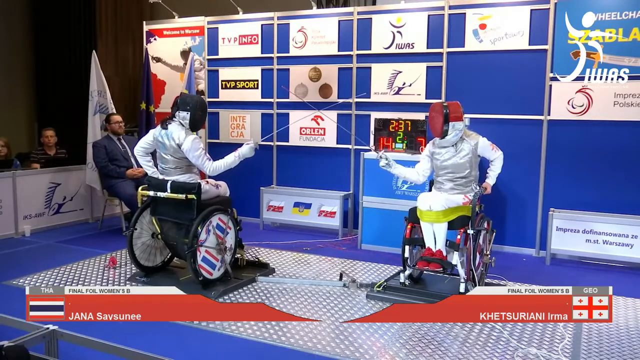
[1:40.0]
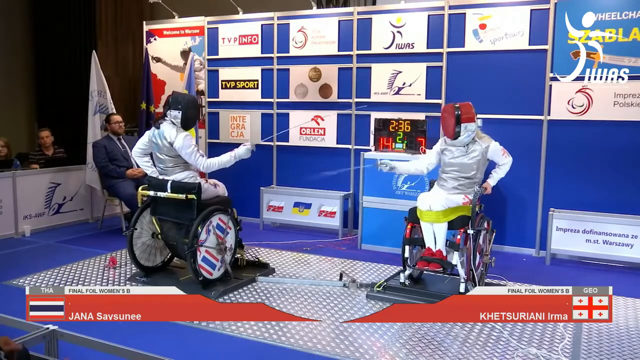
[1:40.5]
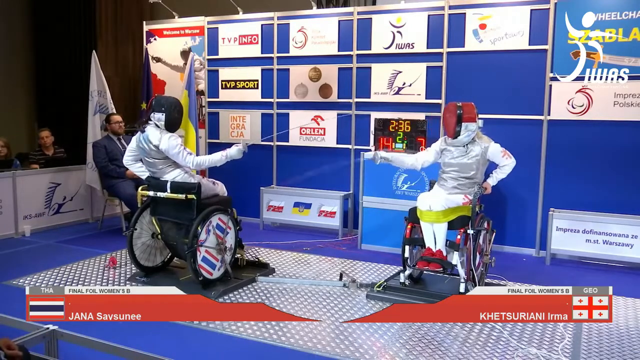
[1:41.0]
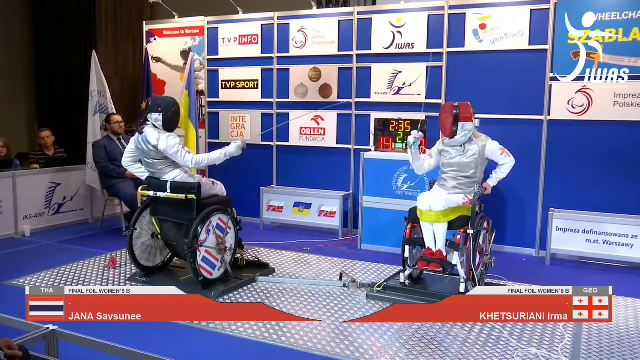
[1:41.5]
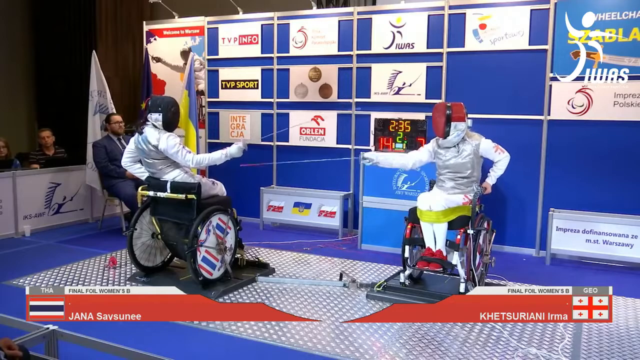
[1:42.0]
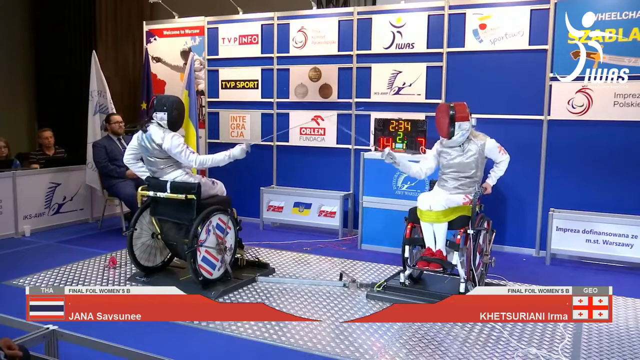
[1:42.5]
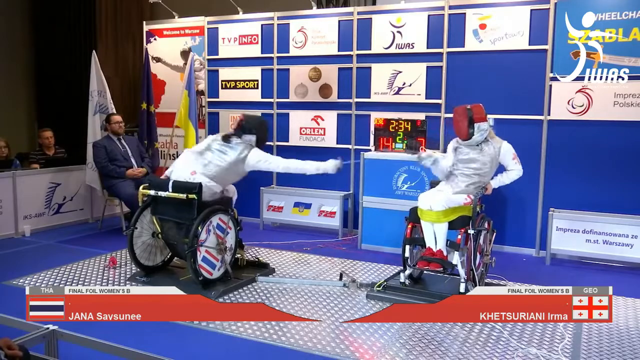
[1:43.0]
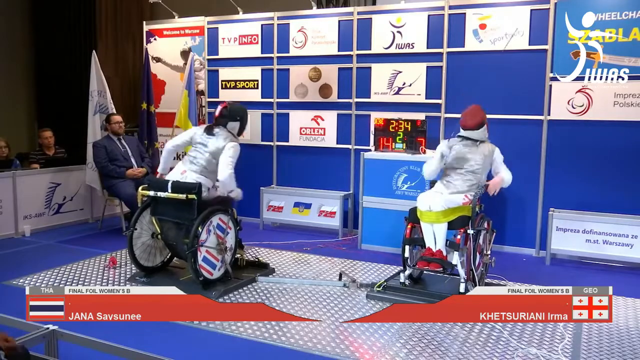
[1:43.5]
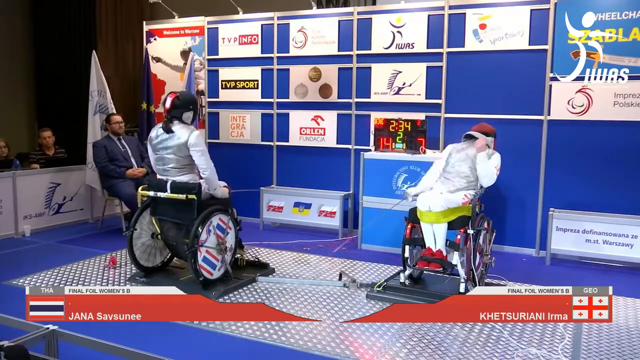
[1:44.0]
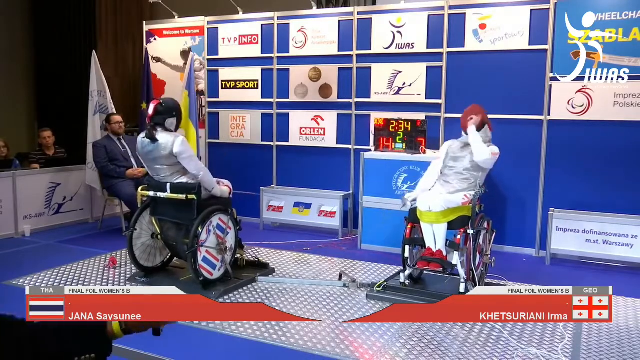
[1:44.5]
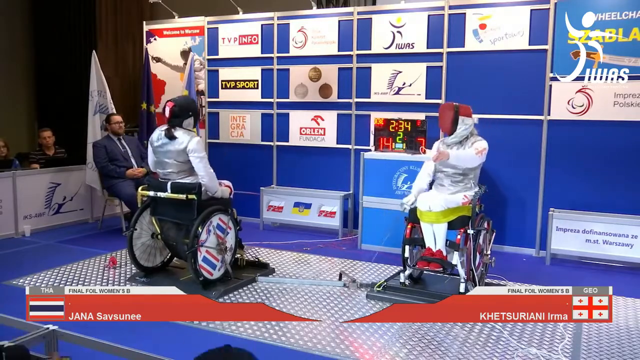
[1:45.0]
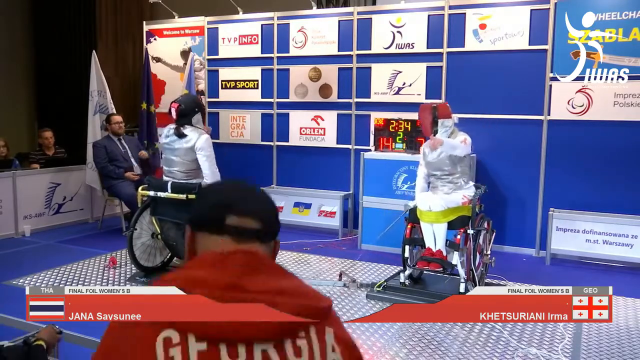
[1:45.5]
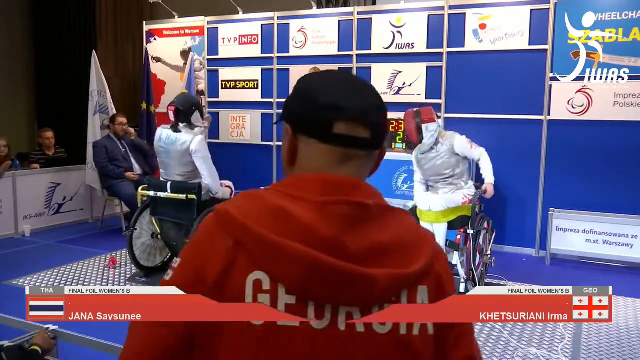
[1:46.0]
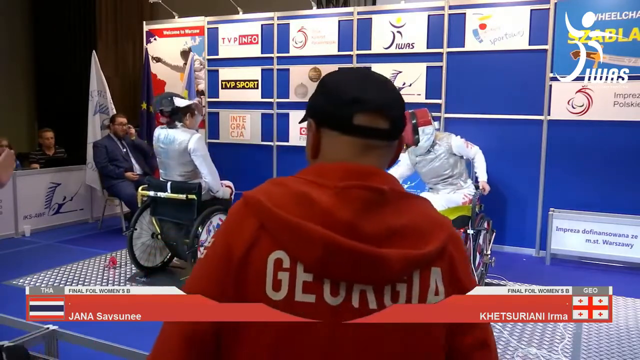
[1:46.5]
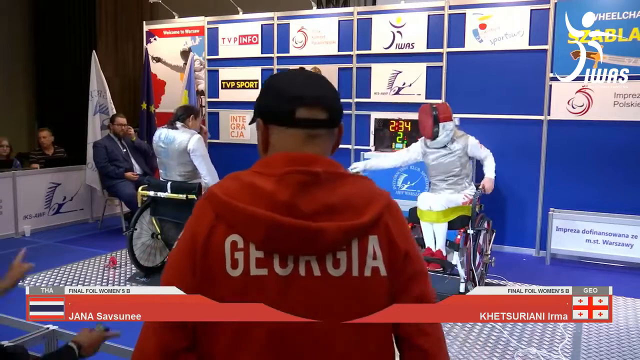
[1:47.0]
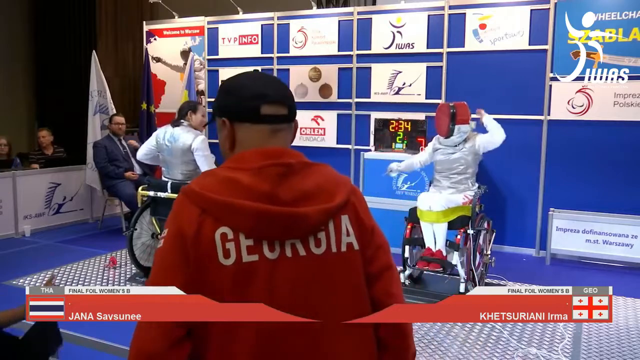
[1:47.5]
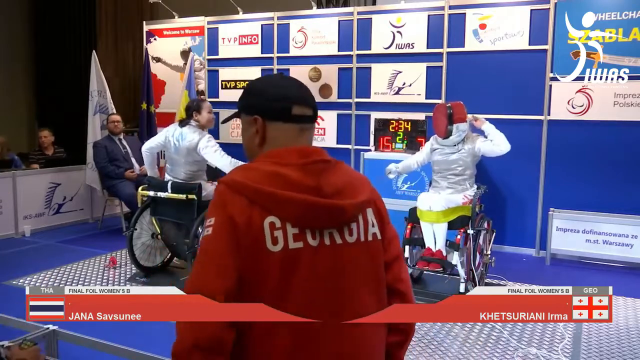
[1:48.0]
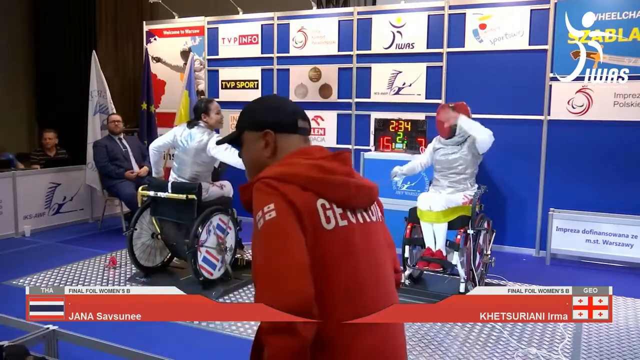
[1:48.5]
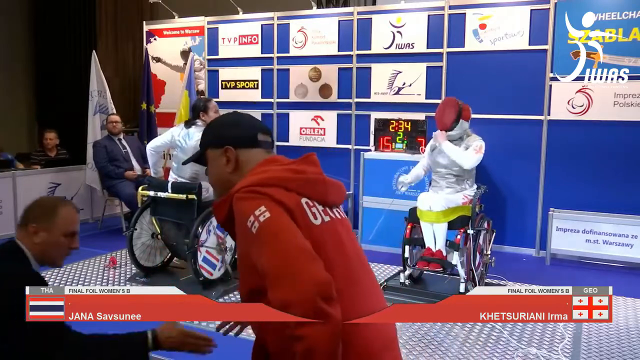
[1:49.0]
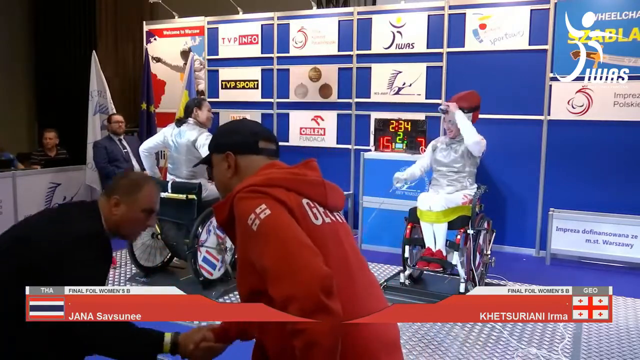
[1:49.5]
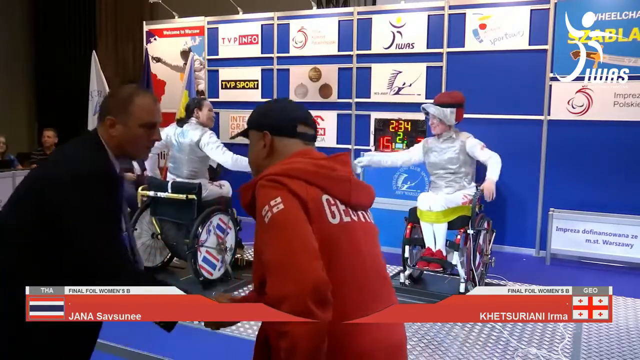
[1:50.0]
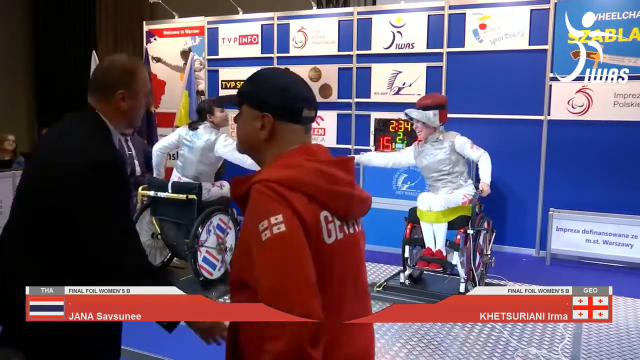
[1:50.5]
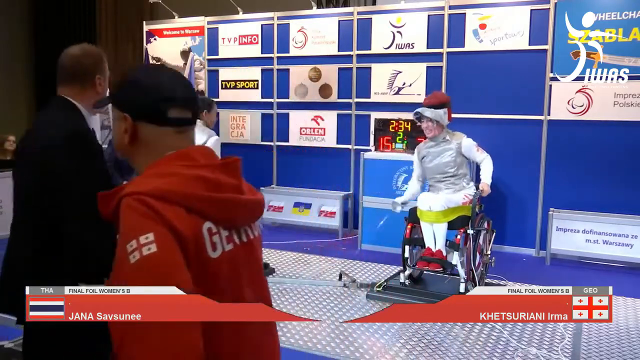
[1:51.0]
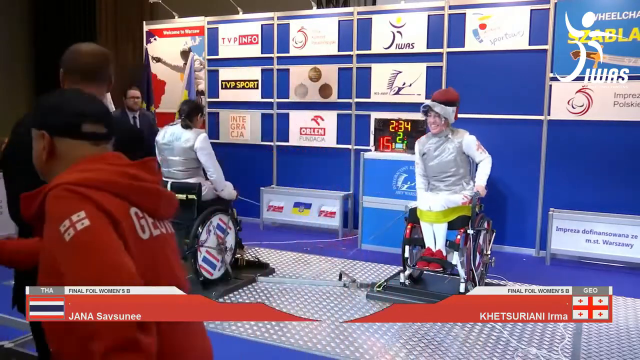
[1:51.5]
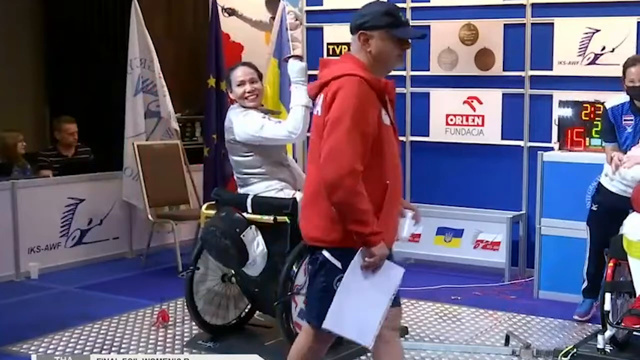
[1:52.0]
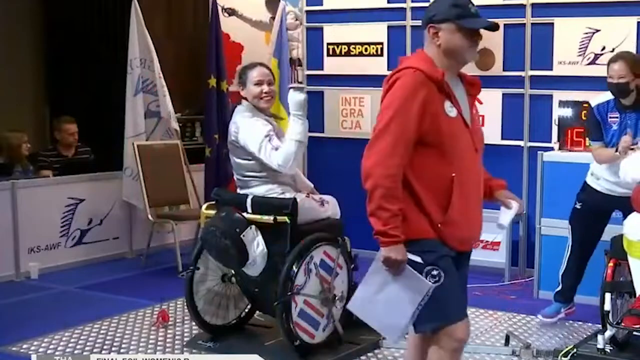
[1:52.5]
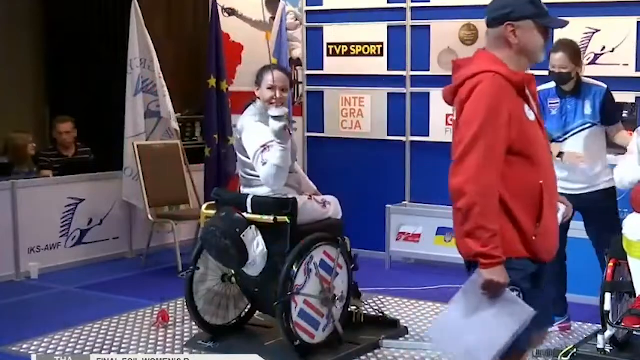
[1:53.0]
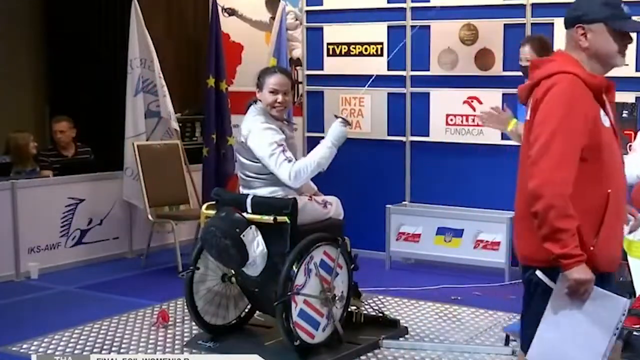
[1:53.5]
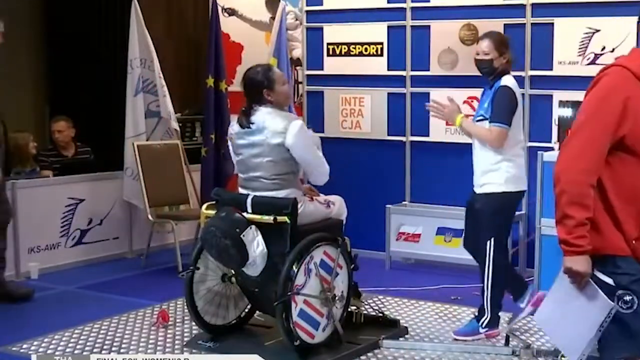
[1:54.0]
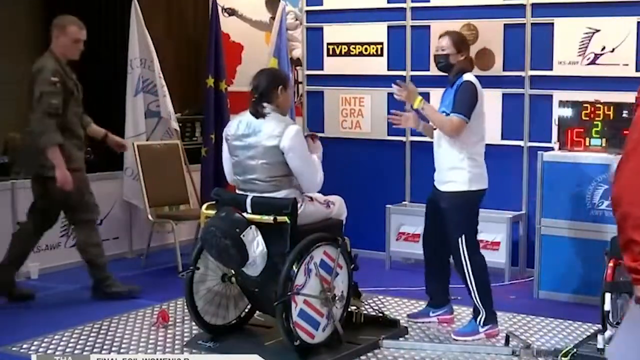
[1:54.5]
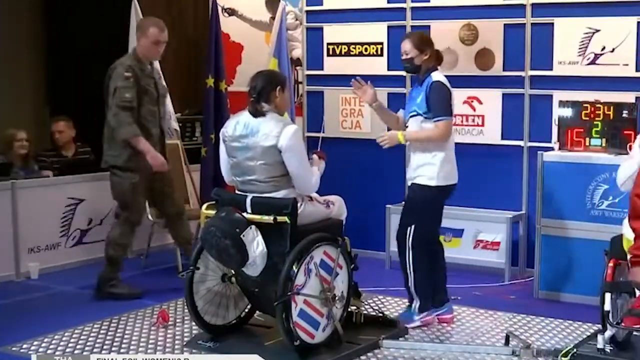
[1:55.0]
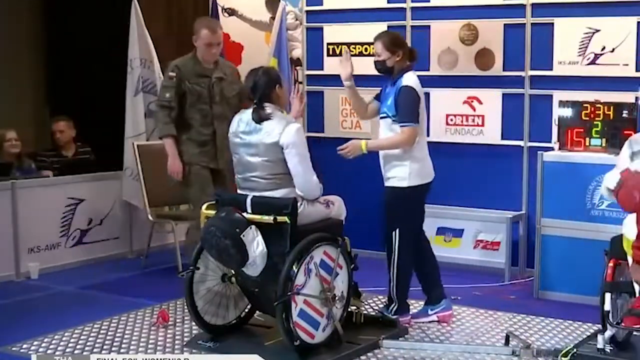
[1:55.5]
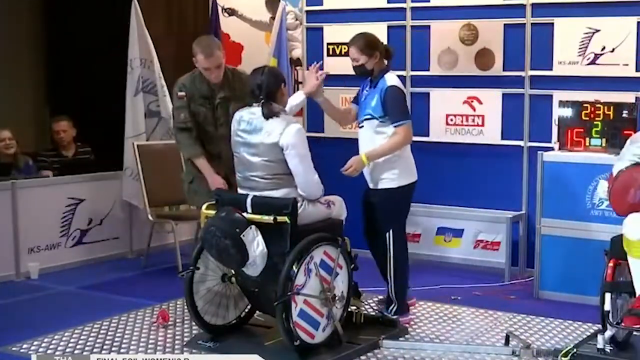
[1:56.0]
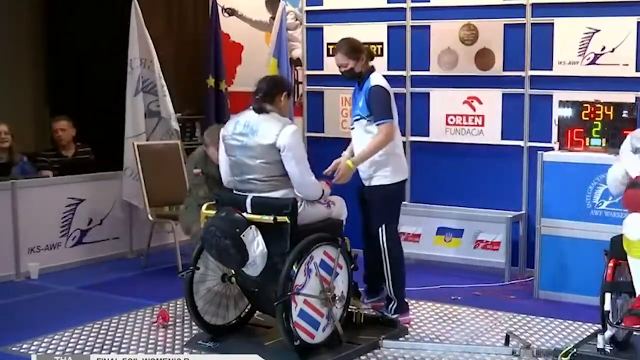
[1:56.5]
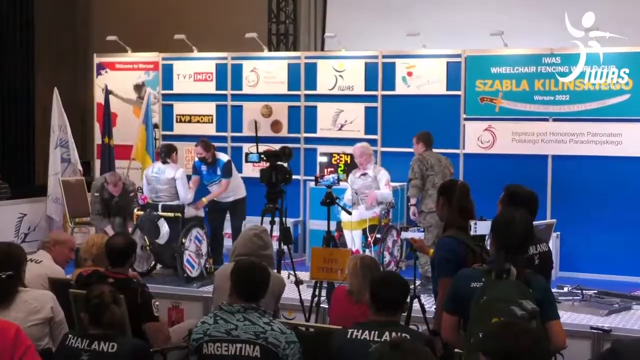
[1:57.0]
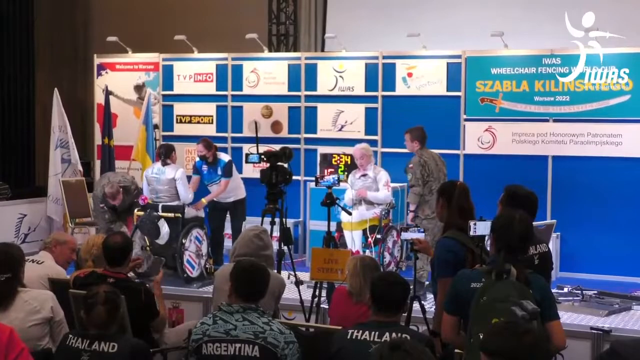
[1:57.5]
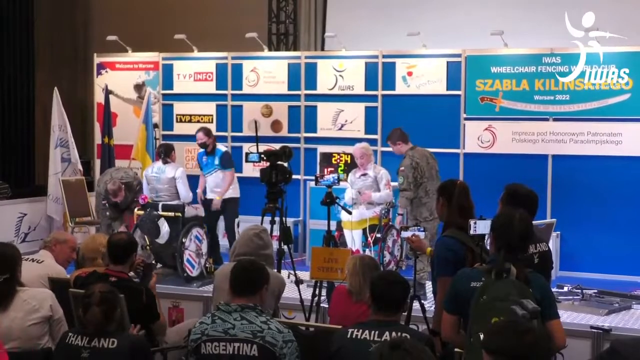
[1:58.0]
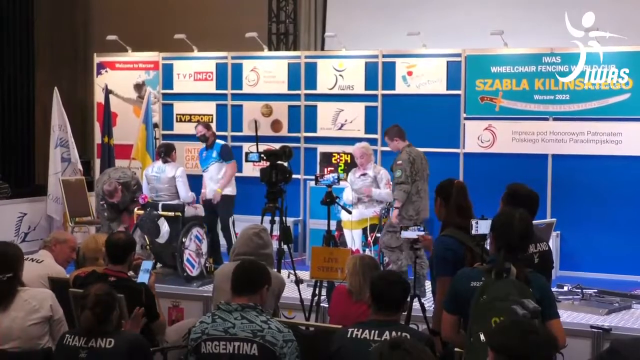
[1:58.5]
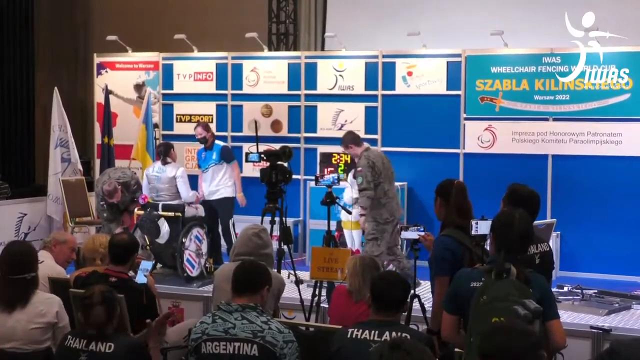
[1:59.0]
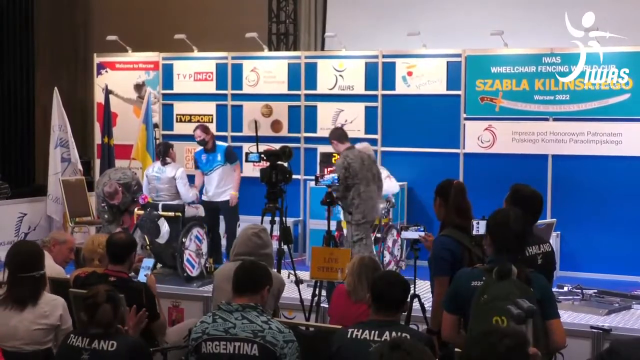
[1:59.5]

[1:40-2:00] The fencers continue to fight. The person on the left strikes the person on the right, who kind of leans back. A man from the stands stands up right in front; he wears a red hoodie with the word "Georgia" on the back and a black hat. It appears the match is over. Both fencers take off their masks, revealing that both are female. The person on the left has won, and the scoreboard in the background to the right now reads 15 to 7. What looks like her coach comes over to her, claps, and gives her a high five. The view then zooms out to show a wider view of the event, with spectators at the bottom standing up who had been sitting around watching the match.